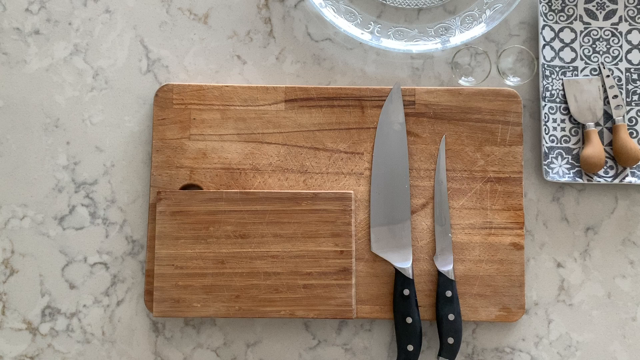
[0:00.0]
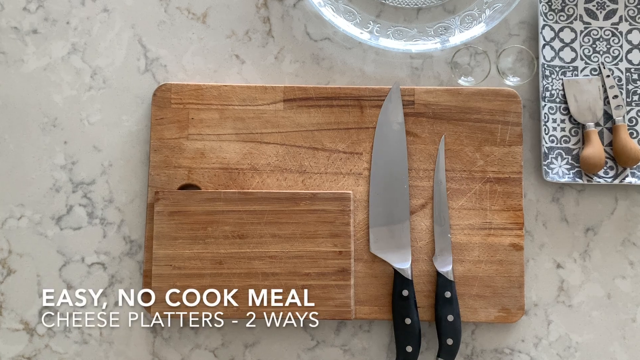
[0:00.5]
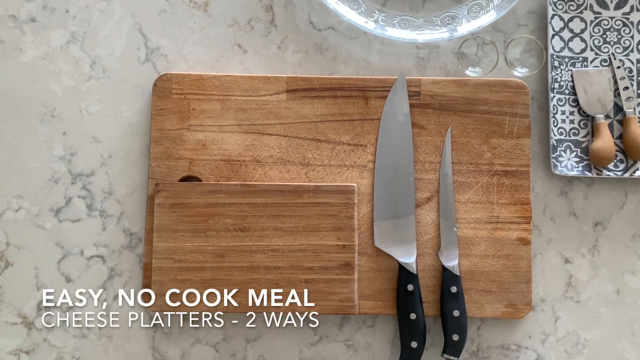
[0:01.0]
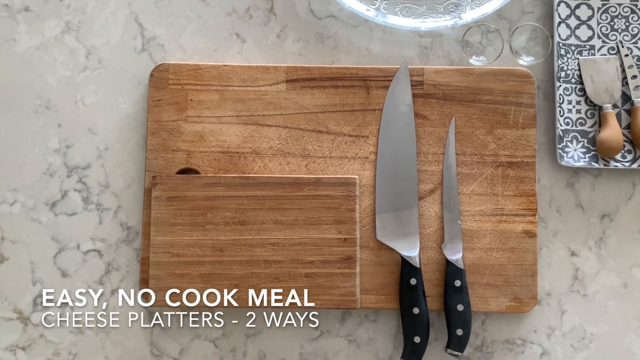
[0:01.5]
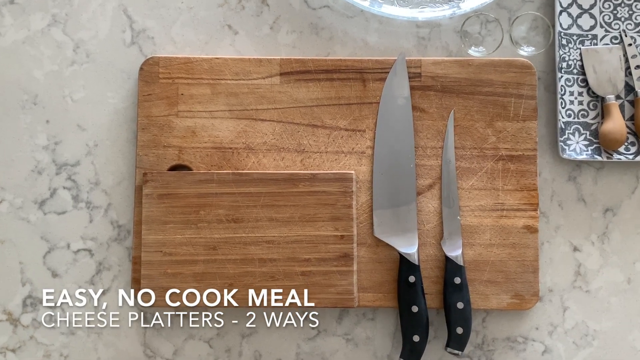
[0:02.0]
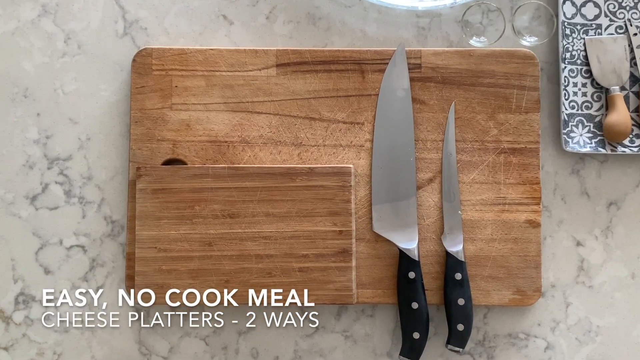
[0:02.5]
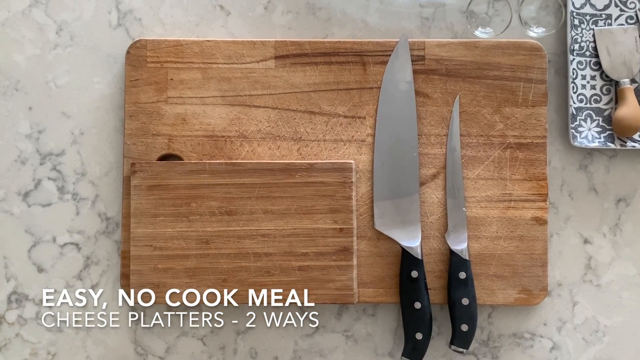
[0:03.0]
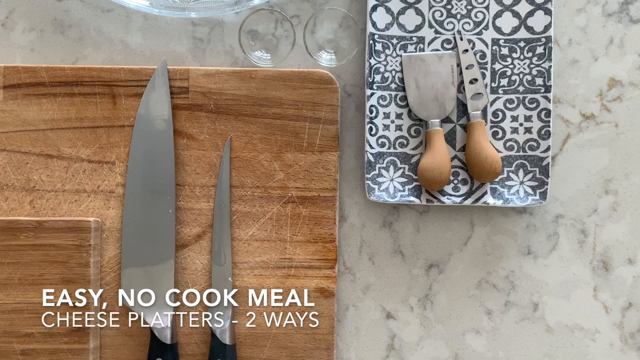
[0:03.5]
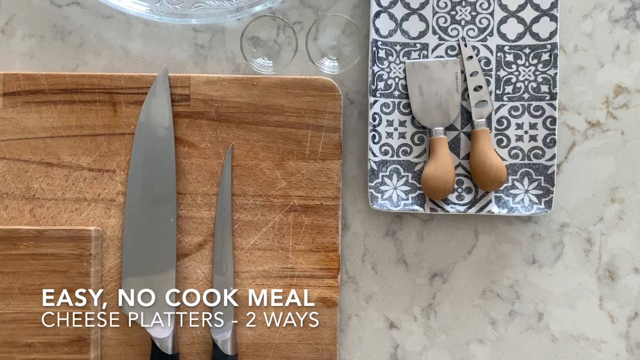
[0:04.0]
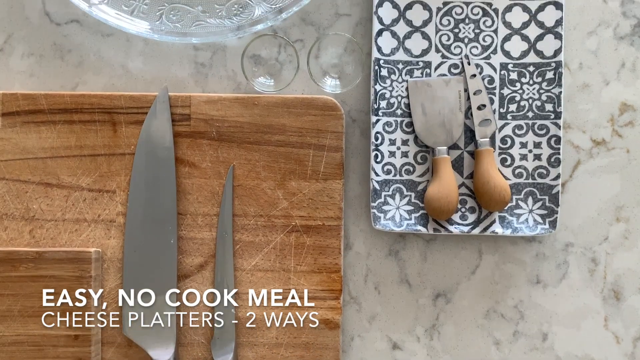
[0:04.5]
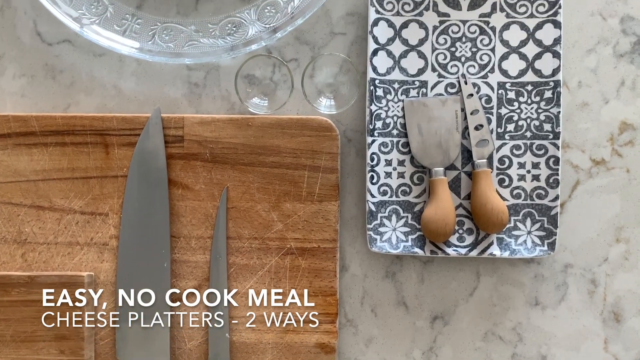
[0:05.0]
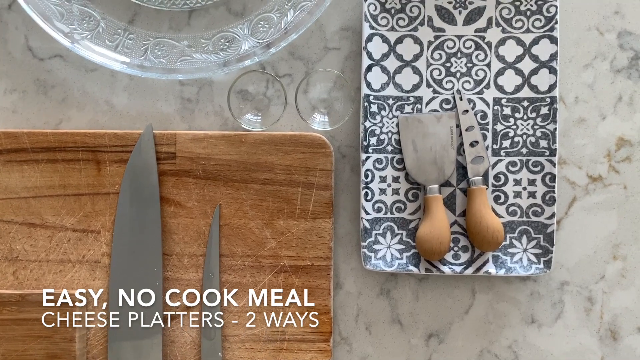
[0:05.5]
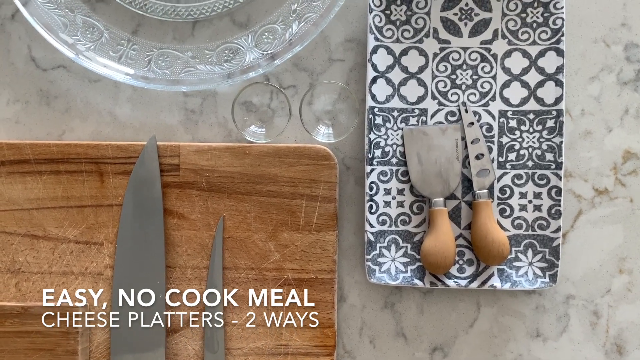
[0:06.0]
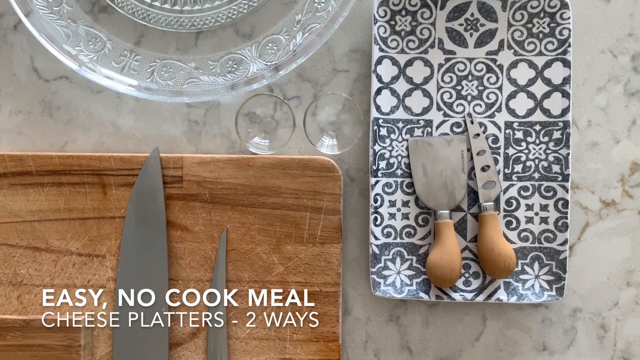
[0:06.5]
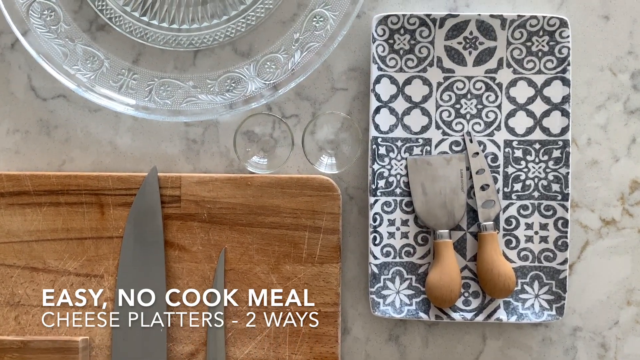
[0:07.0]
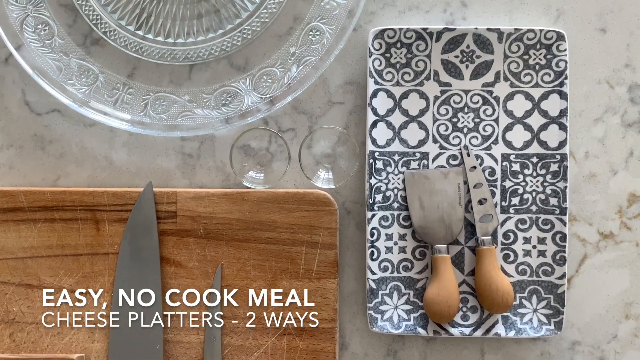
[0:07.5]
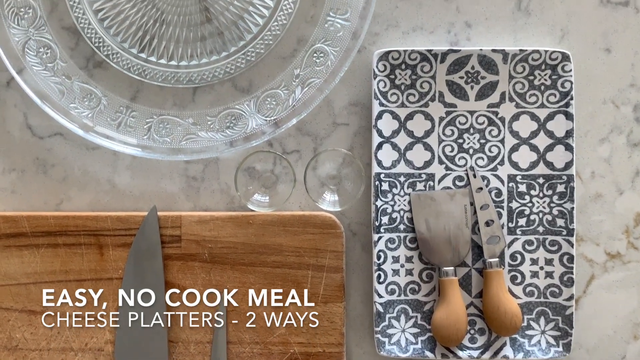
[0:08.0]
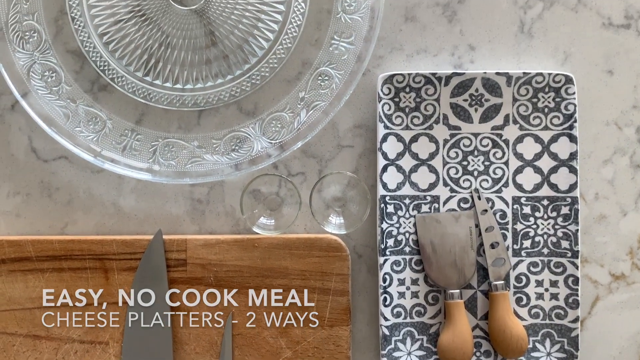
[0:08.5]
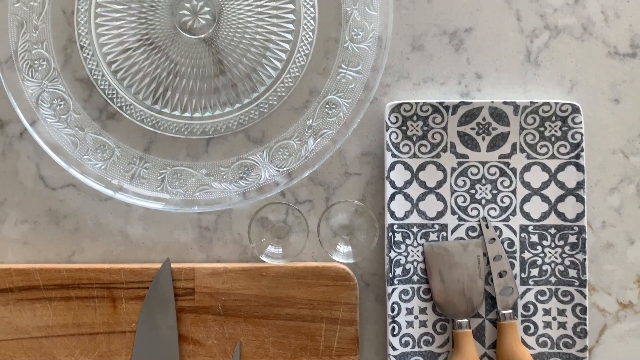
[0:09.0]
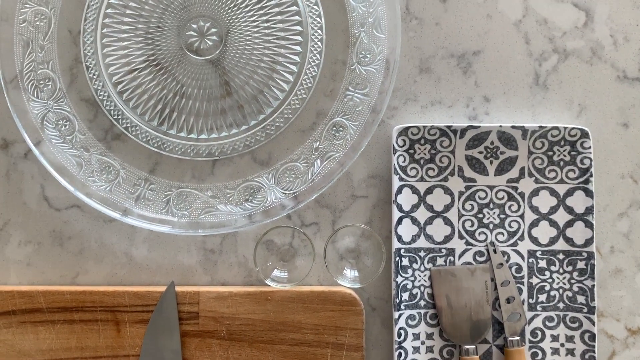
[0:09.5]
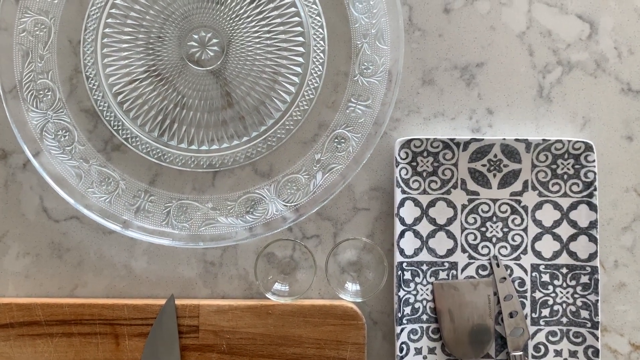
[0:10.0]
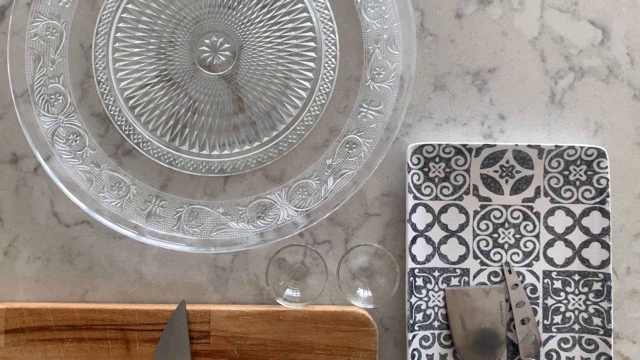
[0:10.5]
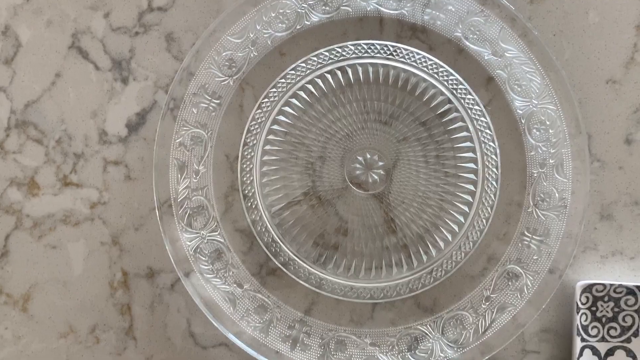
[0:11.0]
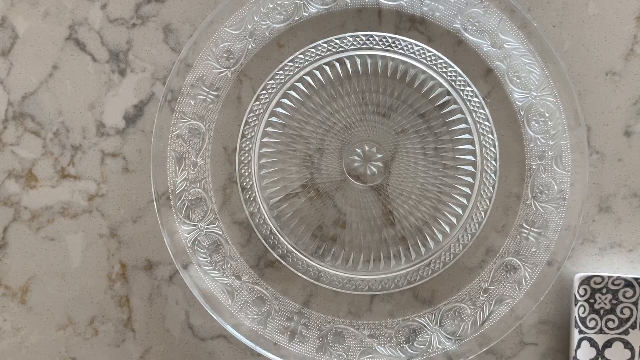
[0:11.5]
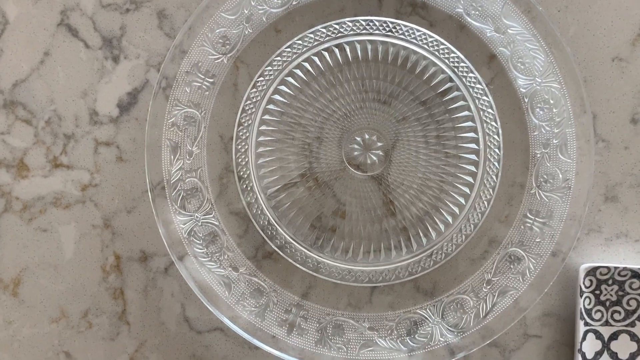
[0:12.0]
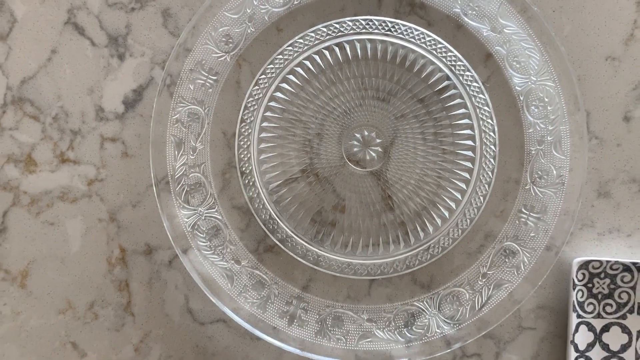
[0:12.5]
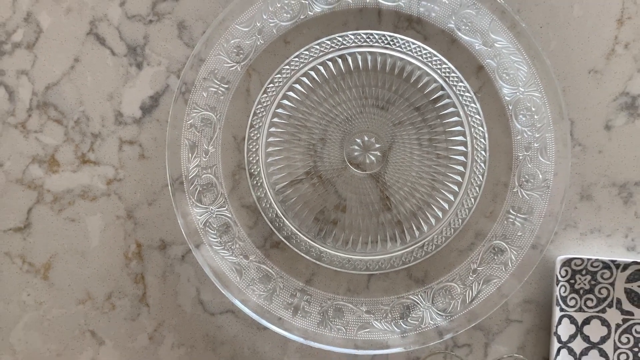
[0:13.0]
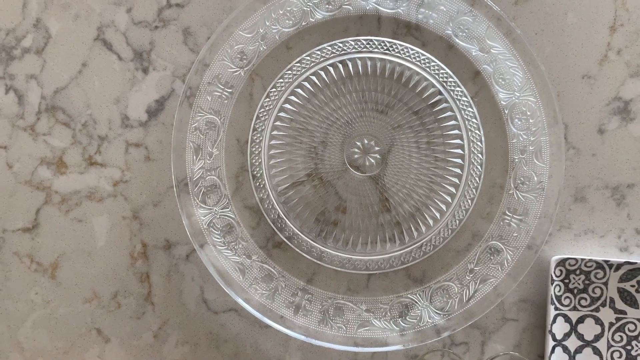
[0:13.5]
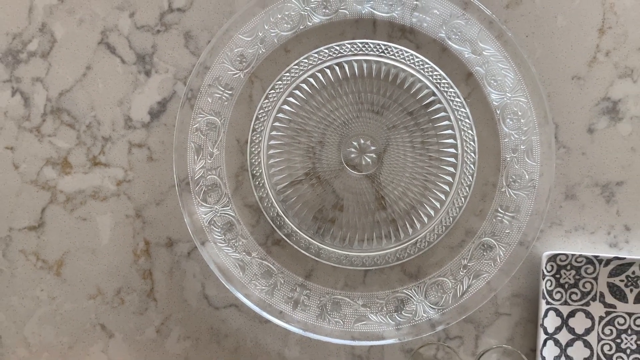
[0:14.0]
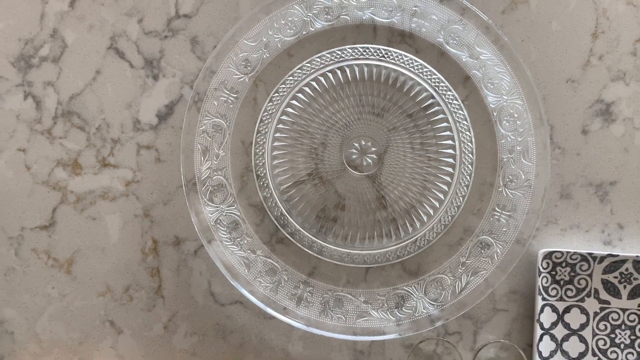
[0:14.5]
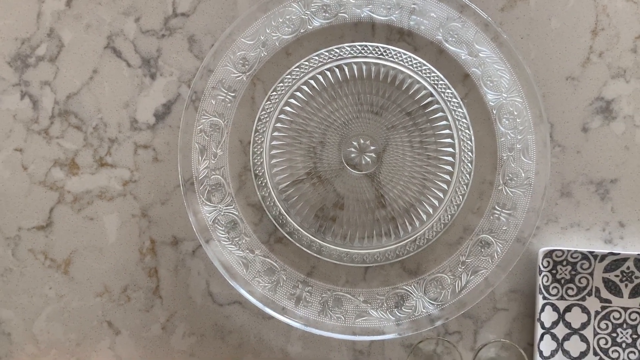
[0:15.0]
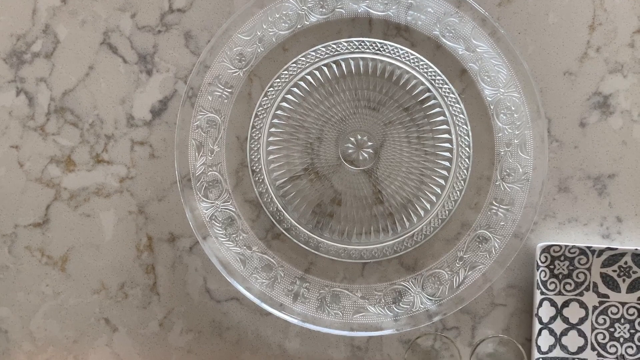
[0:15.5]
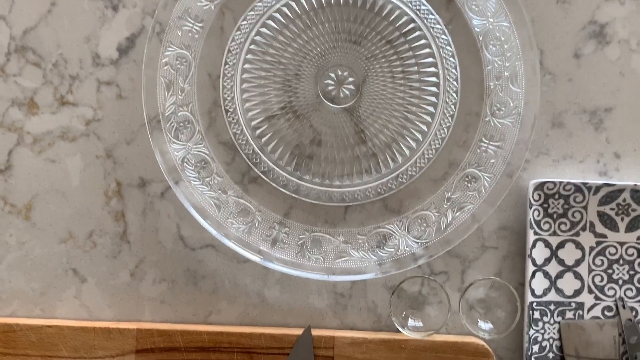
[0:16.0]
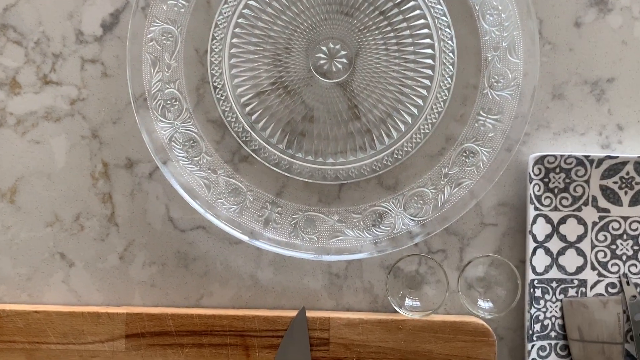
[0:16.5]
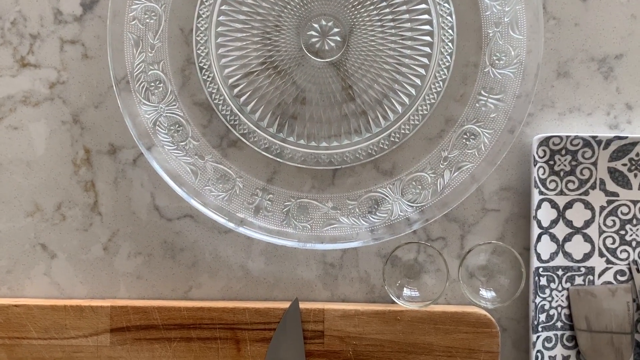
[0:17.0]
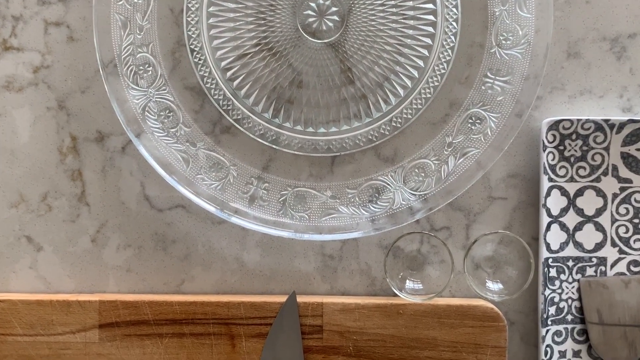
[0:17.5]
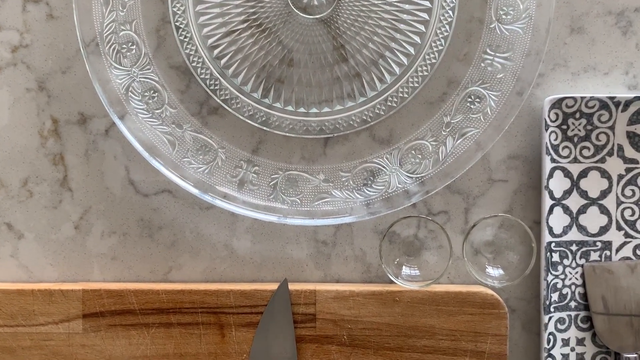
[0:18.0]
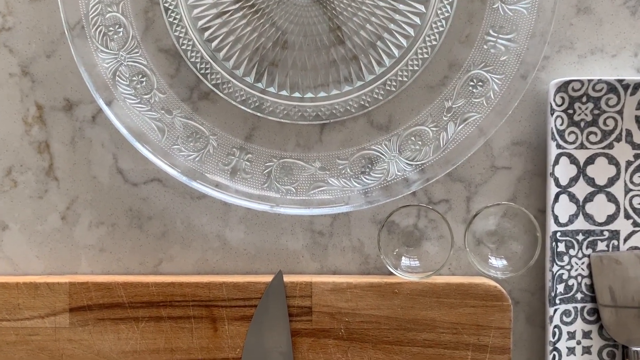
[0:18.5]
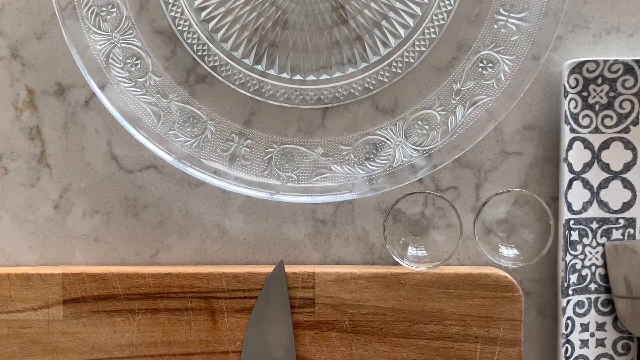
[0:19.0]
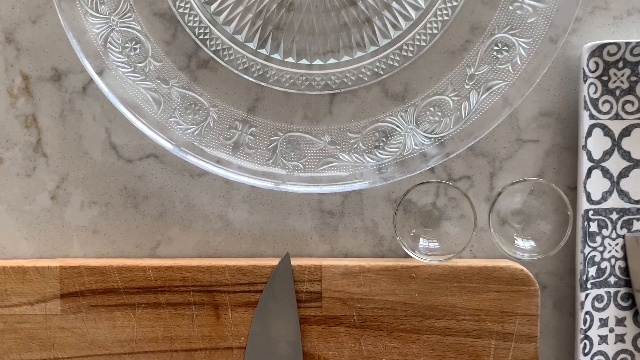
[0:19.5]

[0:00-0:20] The video concerns easy, no-cook meals: cheese platters two ways. It opens on a large brown cutting board with a smaller cutting board on top of it. The two boards are on what appears to be a marble or granite countertop. On the large cutting board are two knives, one larger than the other; one looks like it could be a butcher's knife, and the other looks like it could be a paring knife. In the top right-hand corner is a saucer or smaller plate with white and blue decor, and on top of that plate are two other cutting utensils. A large clear bowl is on the countertop right above the brown cutting board.